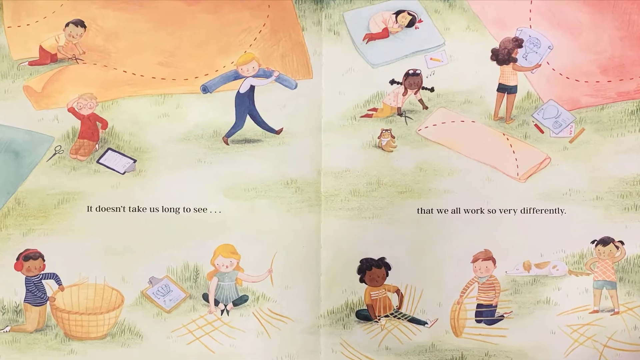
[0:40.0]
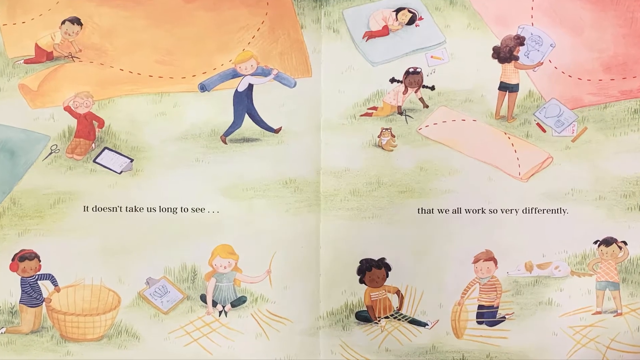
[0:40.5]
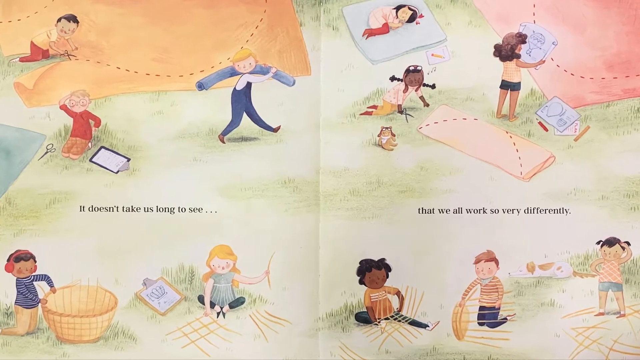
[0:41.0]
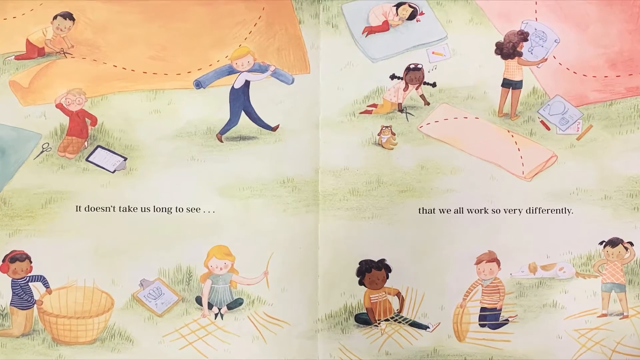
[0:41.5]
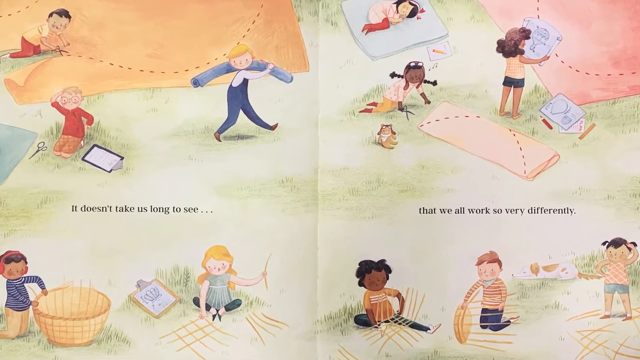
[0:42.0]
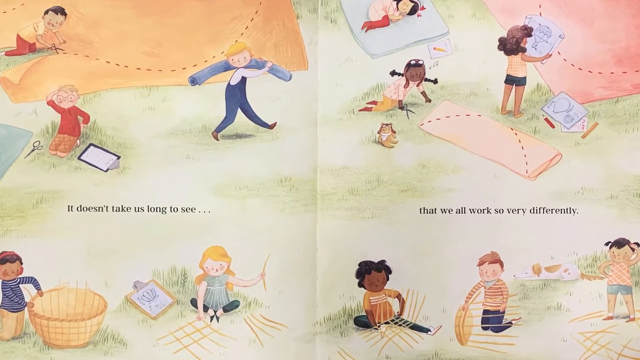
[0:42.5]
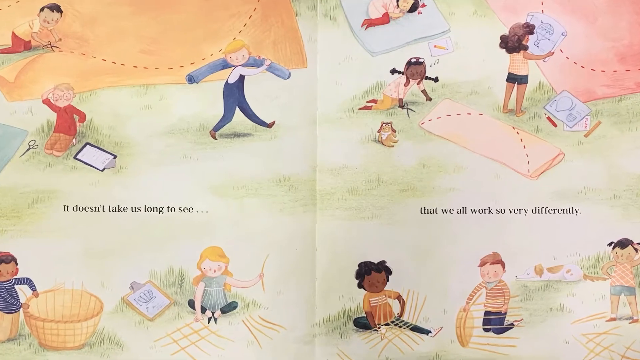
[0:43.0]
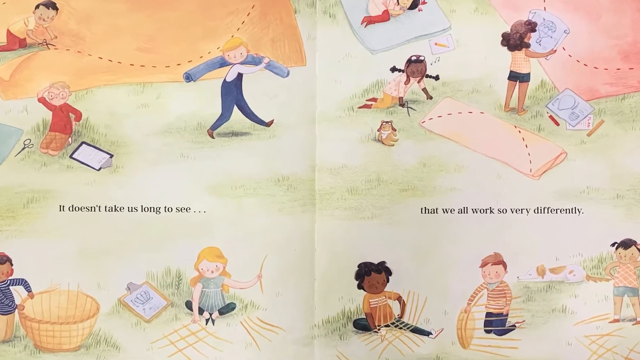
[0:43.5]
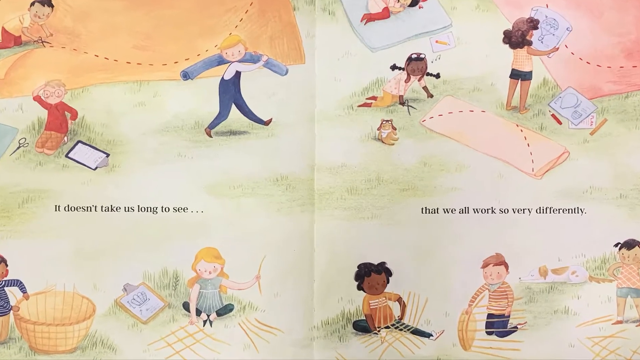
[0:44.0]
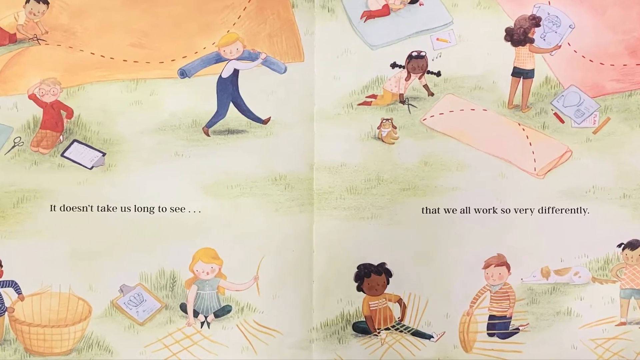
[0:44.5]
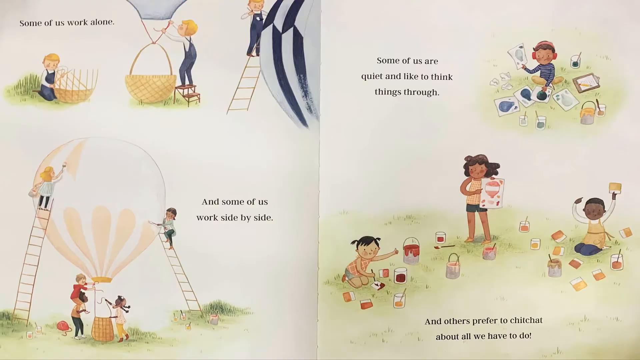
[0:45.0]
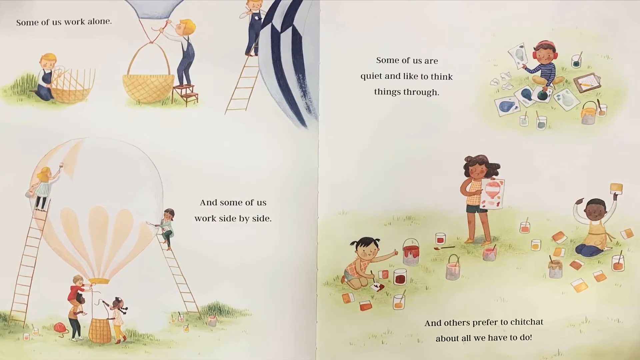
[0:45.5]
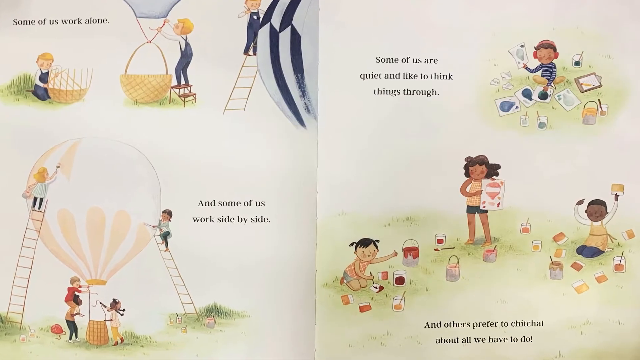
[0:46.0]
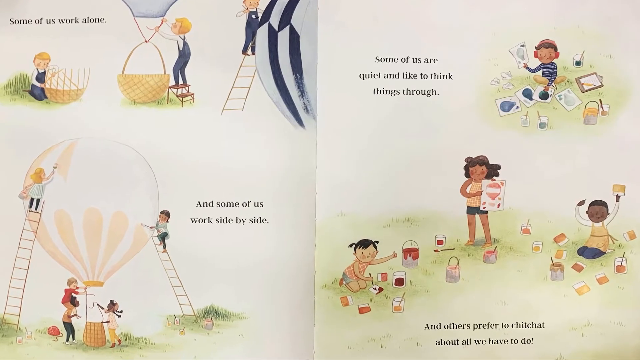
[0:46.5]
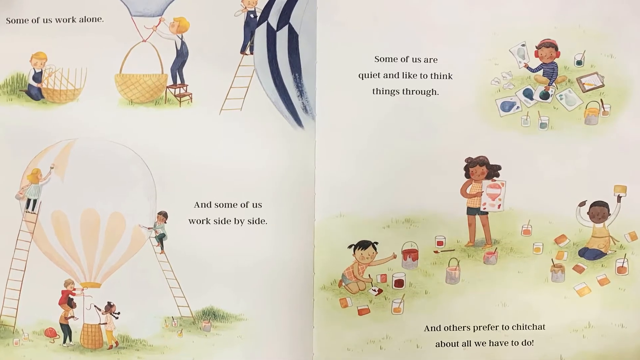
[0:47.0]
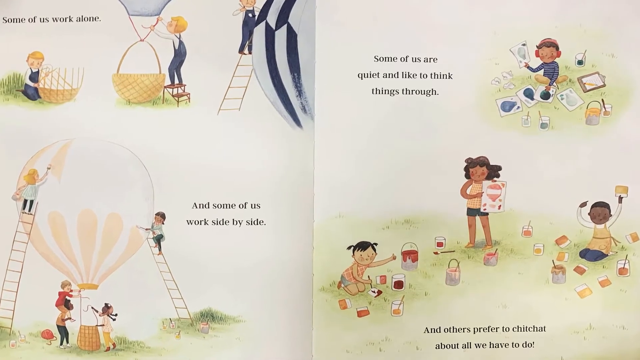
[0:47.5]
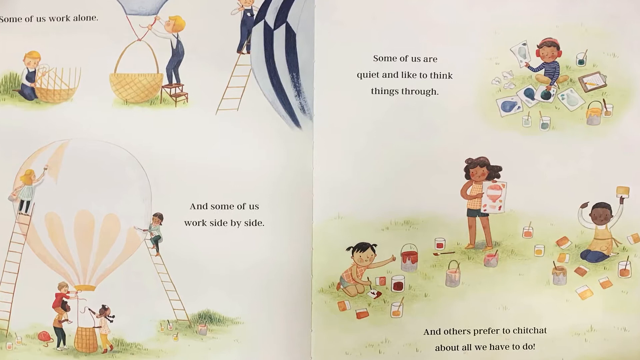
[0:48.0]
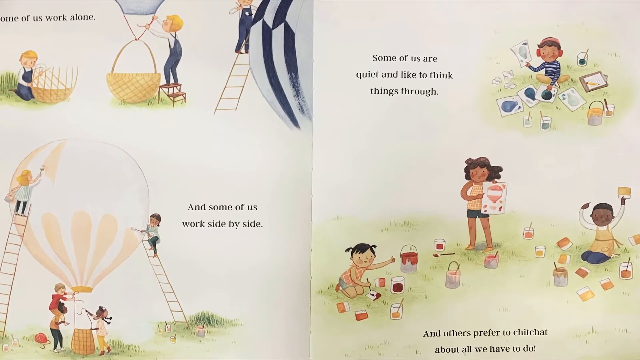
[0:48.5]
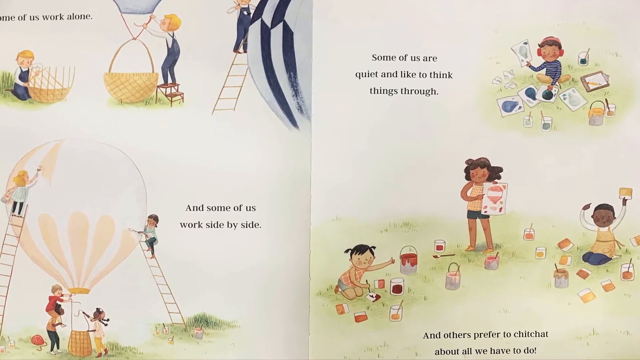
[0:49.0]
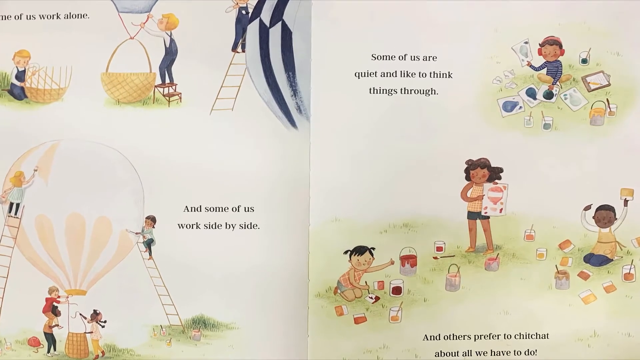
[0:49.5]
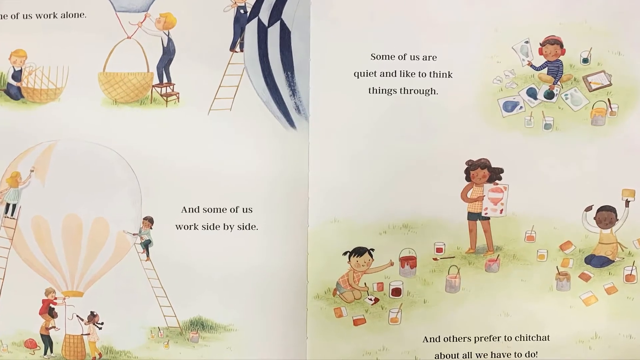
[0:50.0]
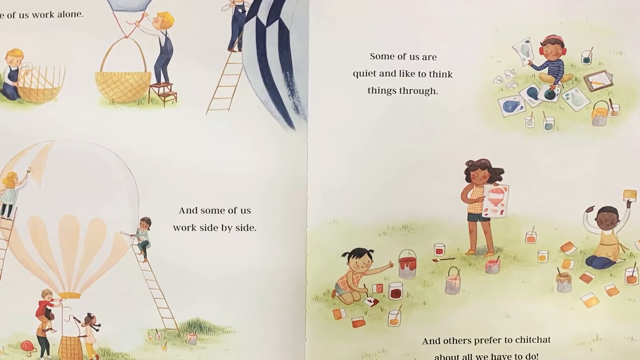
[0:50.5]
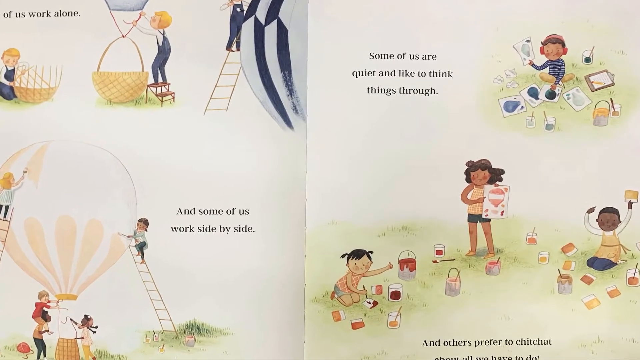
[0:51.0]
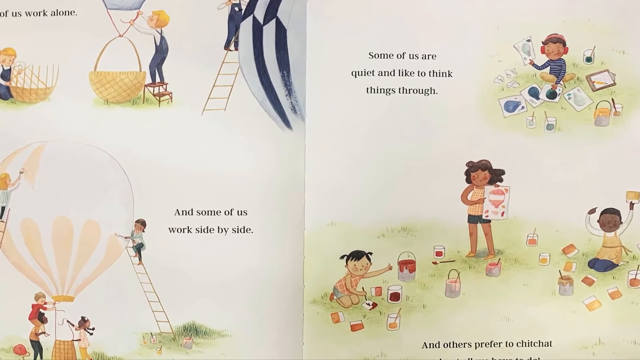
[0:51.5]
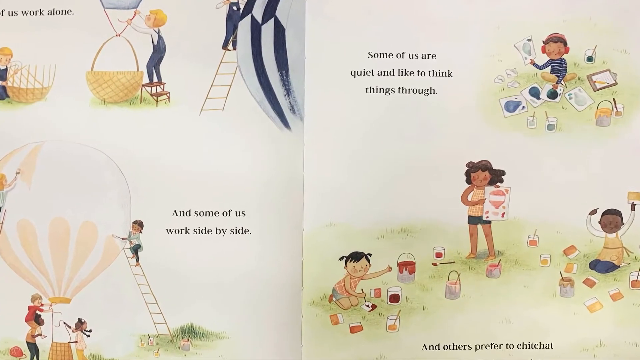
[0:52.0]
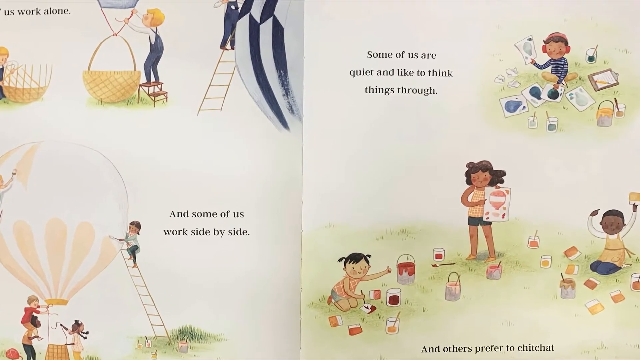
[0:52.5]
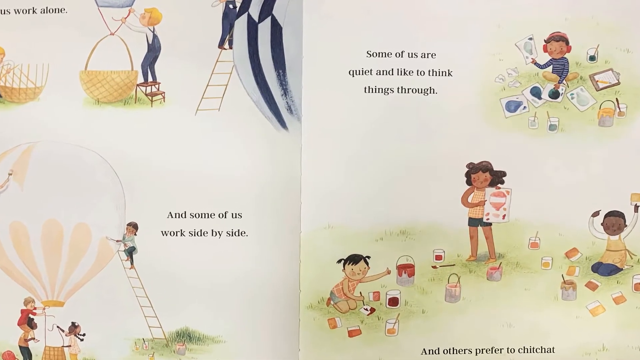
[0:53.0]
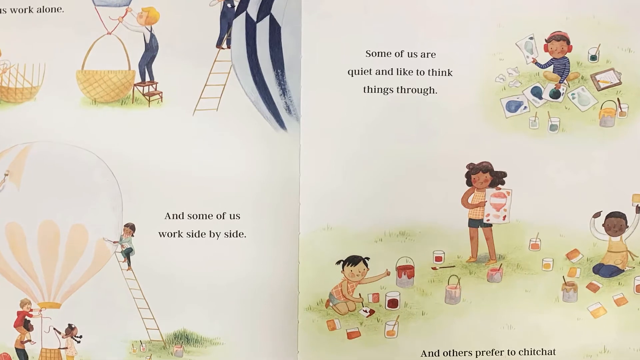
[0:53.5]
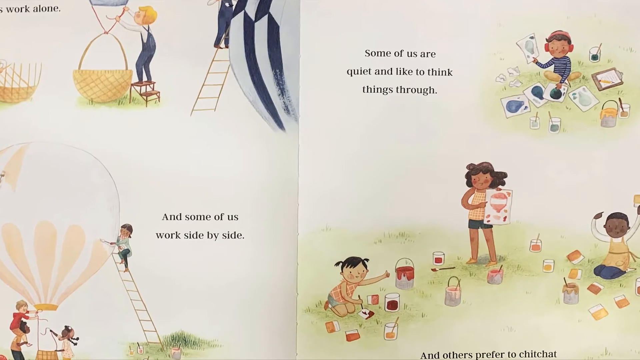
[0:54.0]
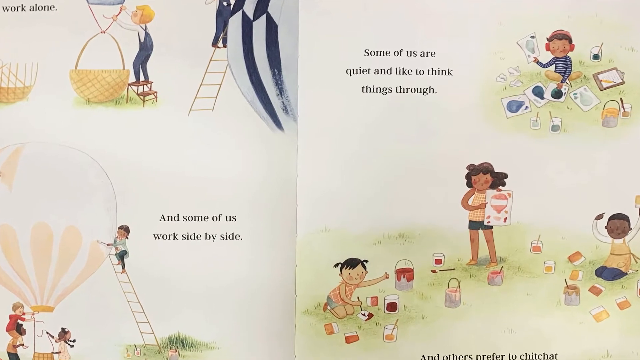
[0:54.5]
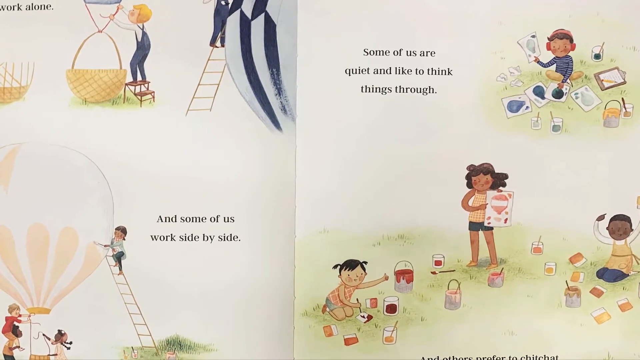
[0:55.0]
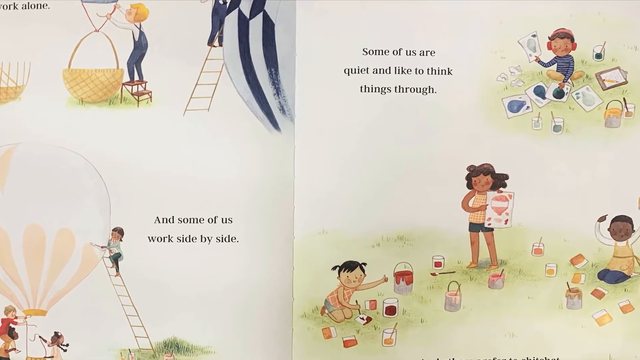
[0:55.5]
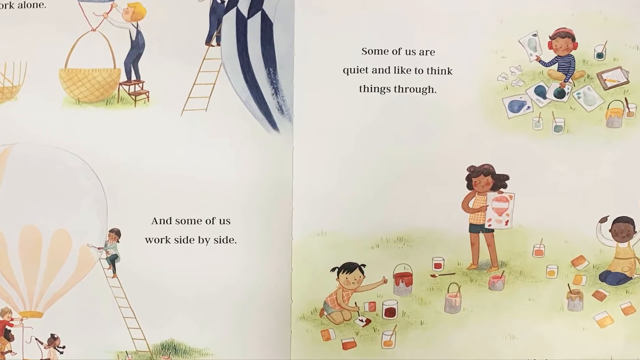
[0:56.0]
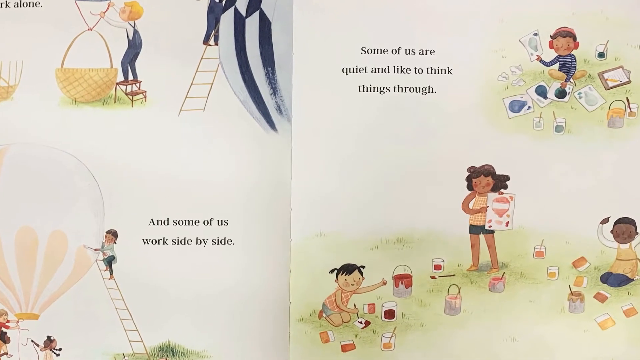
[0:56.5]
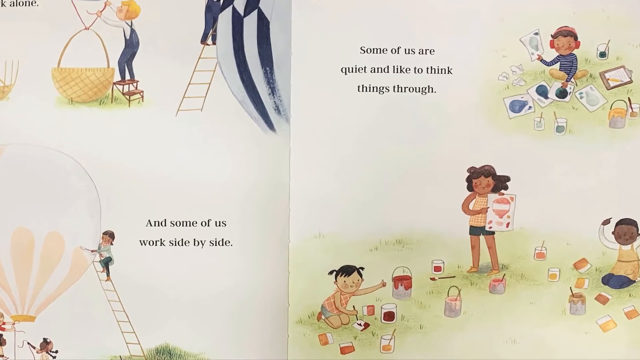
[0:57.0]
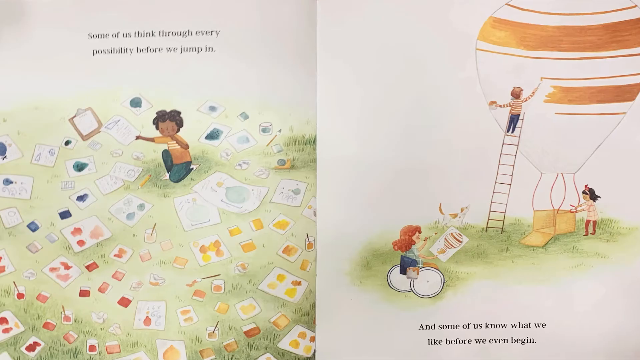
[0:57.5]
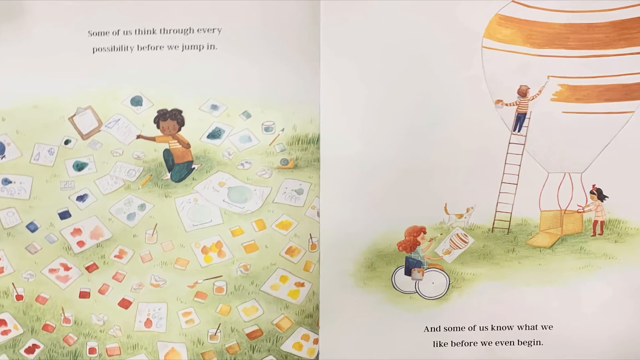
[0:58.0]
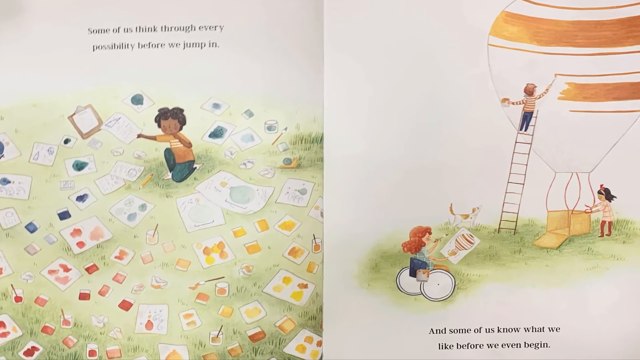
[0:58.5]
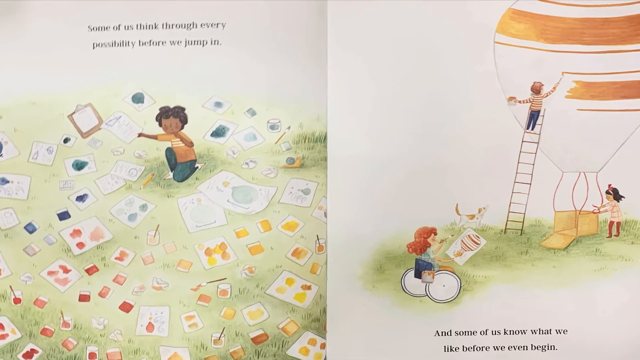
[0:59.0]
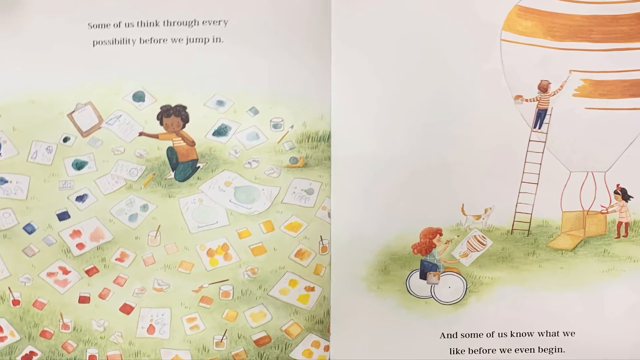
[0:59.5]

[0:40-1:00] The storybook turns to the next spread. In the middle of the left-hand page the text says "it doesn't take us long to see", and on the right it continues "that we all work so very differently". On the left-hand page one child cuts the shape of a hot air balloon out of some kind of fabric, another child sits with scissors and a clipboard and looks like he is thinking before he works, and another walks along with a big rolled-up sheet of fabric on his shoulder. At the bottom, someone wearing red headphones makes what looks to be the balloon's basket, and a little girl sitting to the right of him has a clipboard and looks like she is gathering lots of reeds to make her own basket. On the right-hand page more children make hot air balloons in different ways: one looks at a sketch first, one looks like she is taking a nap on her piece of fabric, one gets ready to cut out fabric that is folded, and others at the bottom use reeds and other things to make their baskets. The next spread's left page says "some of us are work alone", showing children working separately: some making baskets, some going up a ladder to check things and tying things on. At the bottom it says "and some of us work side by side", where a few children work on one hot air balloon: one paints it from up a ladder, another paints it below, and one fixes the basket on. The right-hand page says "some of us are quiet and like to think things through" and shows four different children thinking, looking at patterns or paints, and going through things slowly and methodically. The view slowly pans and zooms in on this page so the writing can be read more clearly. The next page has text beginning "some of us think through" and ending "before we jump in", and shows a child sitting with various sketches in lots of different colours.